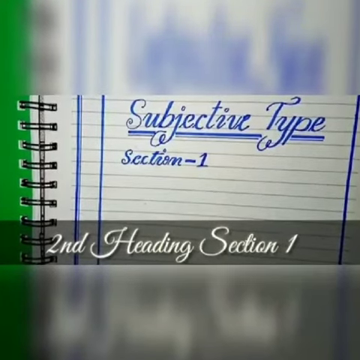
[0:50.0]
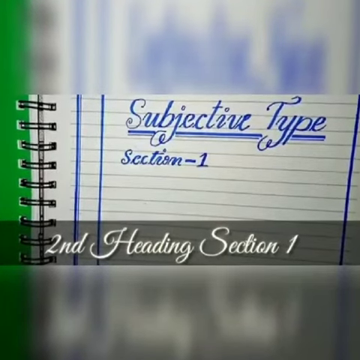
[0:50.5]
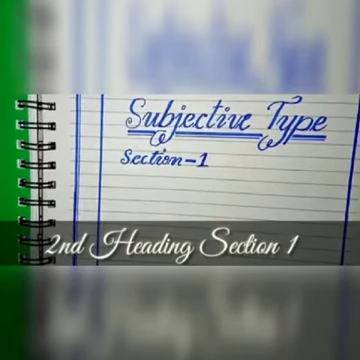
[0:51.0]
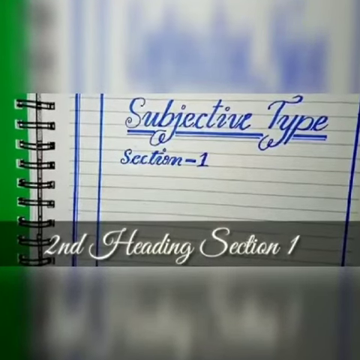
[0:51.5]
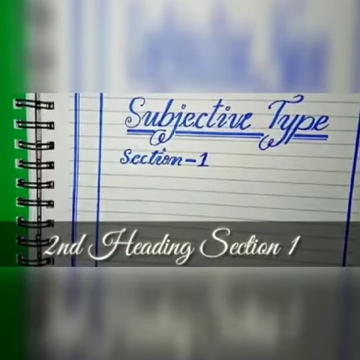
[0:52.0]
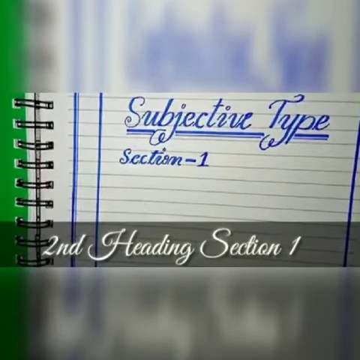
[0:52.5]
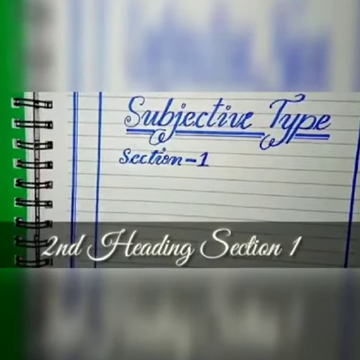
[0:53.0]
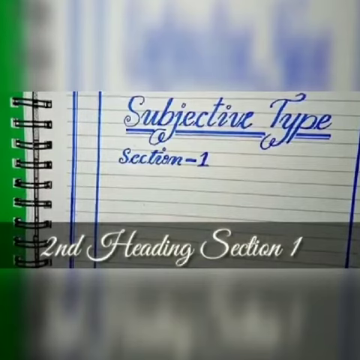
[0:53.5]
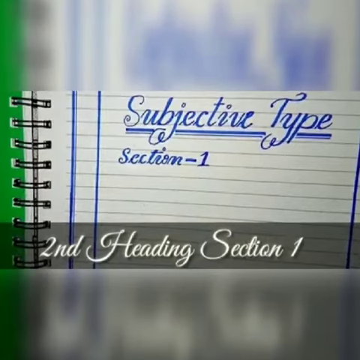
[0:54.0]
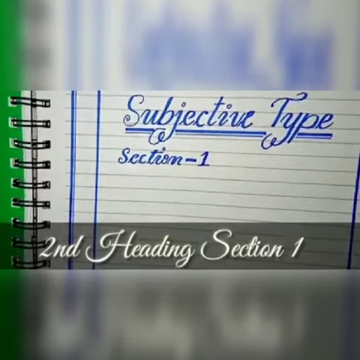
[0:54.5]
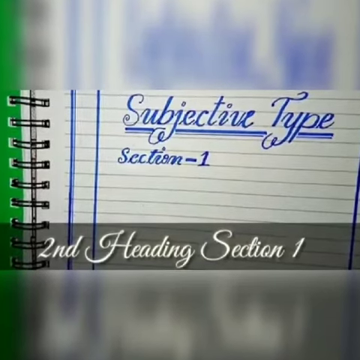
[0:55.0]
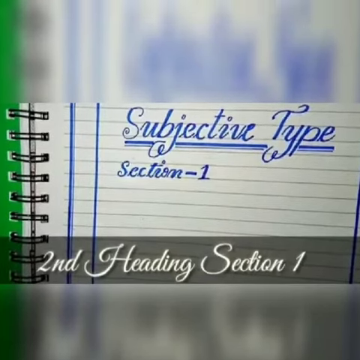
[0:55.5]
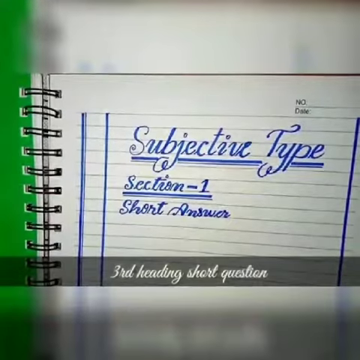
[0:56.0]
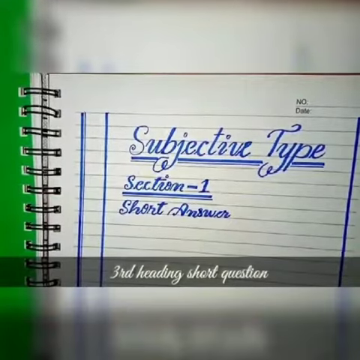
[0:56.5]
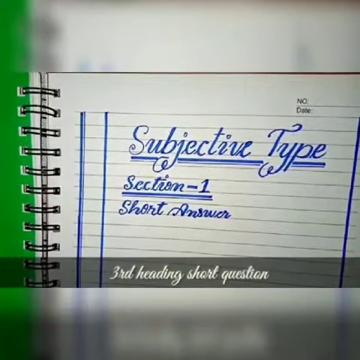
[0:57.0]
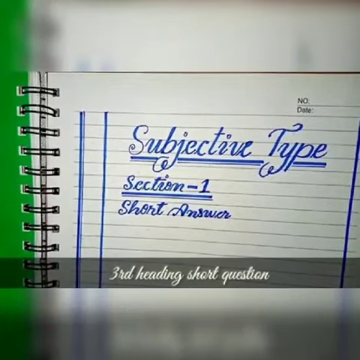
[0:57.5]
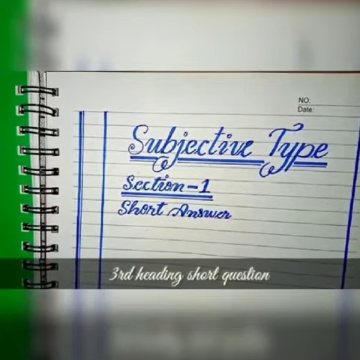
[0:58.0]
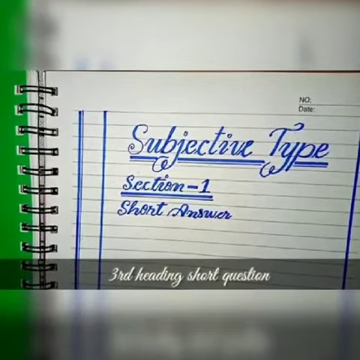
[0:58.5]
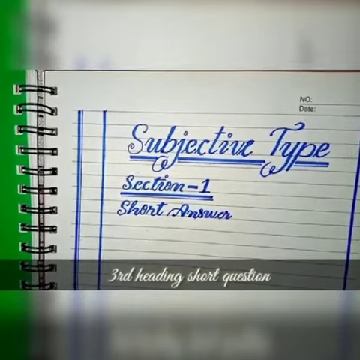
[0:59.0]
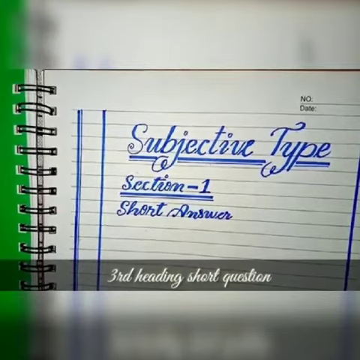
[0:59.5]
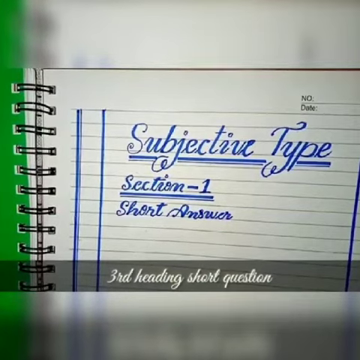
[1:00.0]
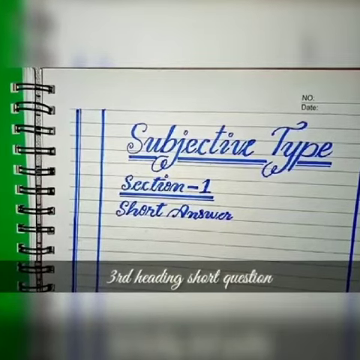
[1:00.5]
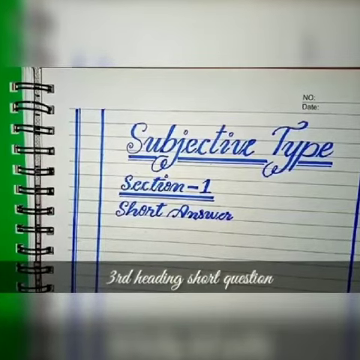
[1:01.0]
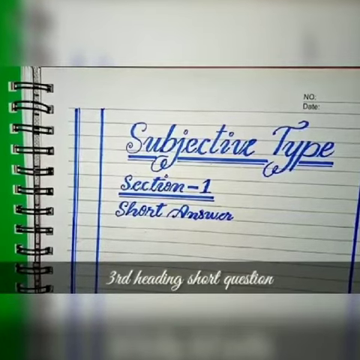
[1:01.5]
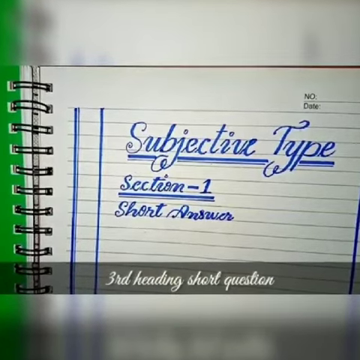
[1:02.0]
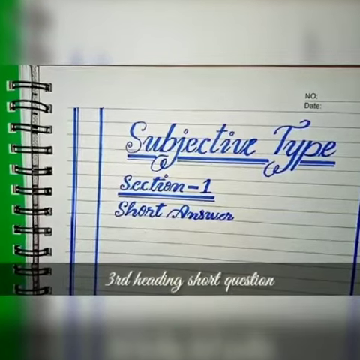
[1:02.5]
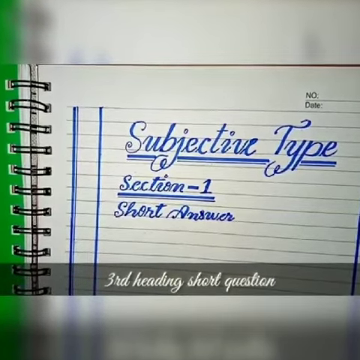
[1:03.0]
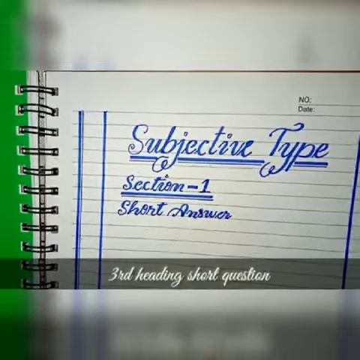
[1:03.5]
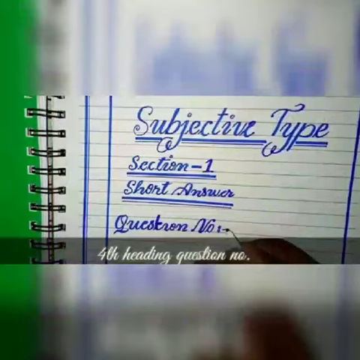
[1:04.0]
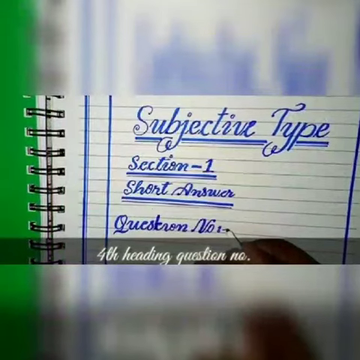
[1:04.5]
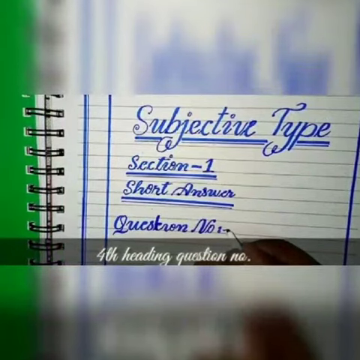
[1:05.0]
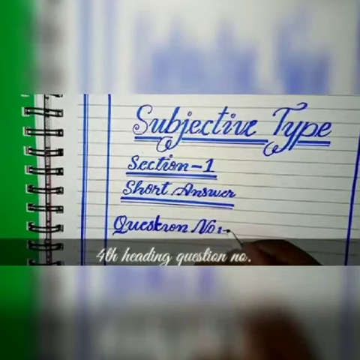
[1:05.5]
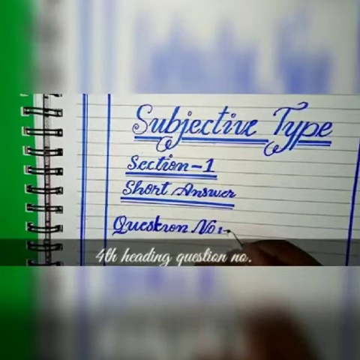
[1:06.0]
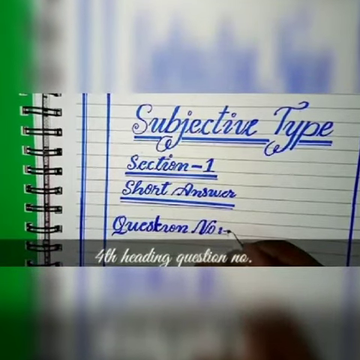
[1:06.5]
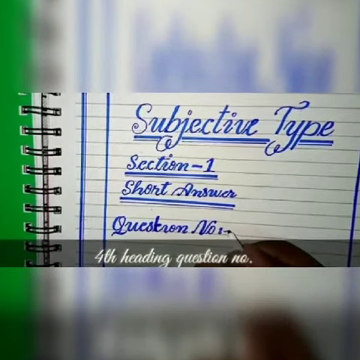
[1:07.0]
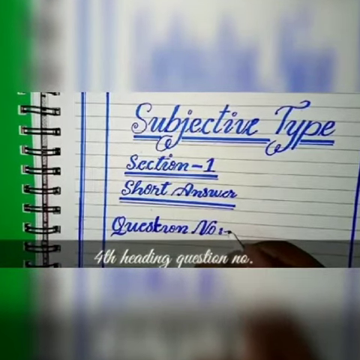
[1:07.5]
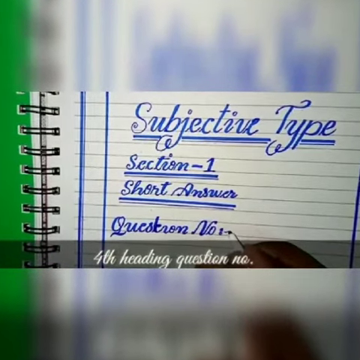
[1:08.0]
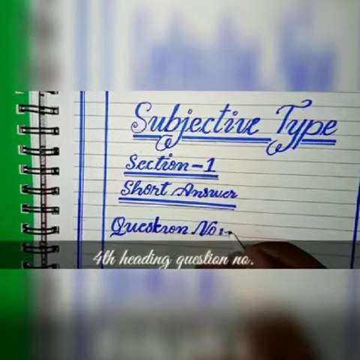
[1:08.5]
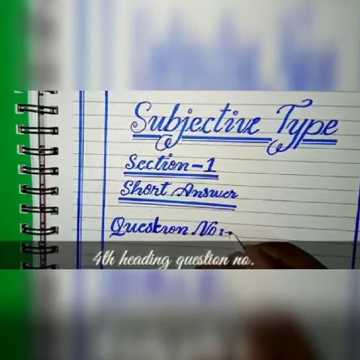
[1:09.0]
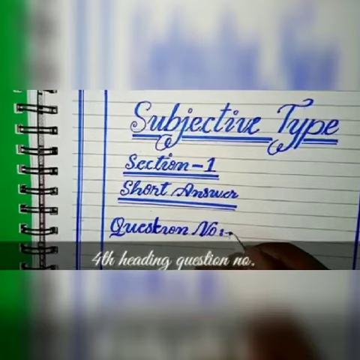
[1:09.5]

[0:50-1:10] The green spiral notebook is shown zoomed up, with the margins already in place. The words "subjective type" are written across about four lines and underlined, followed by a blank line, and under it "section-1" is written. A caption in white on a black see-through banner reads "second heading section one." Another notebook view appears, and now "short answer" is written underneath section one. The caption returns, reading "third heading short question," and in the corner of the paper there is something about "no" and "date." Another direction then reads "fourth heading question number." Written on the page are section one, a line, the next line "short answer" underlined, a space for a line, and then "question number one."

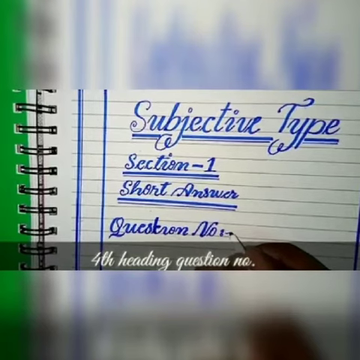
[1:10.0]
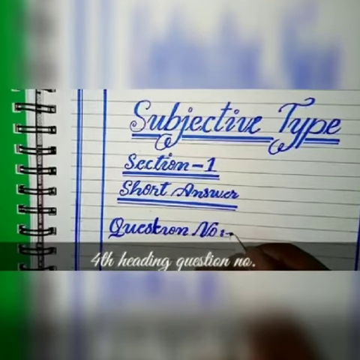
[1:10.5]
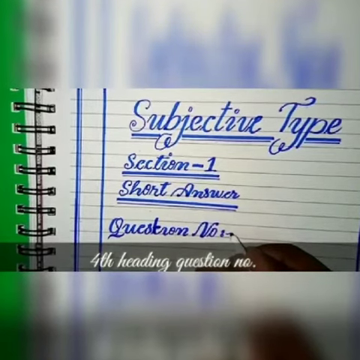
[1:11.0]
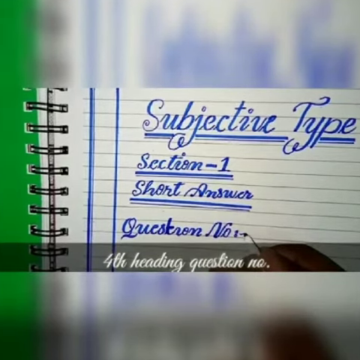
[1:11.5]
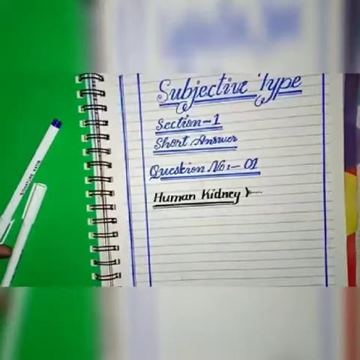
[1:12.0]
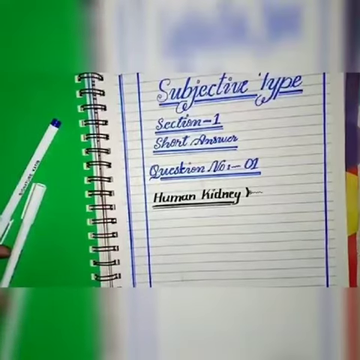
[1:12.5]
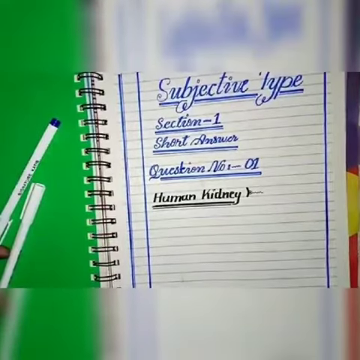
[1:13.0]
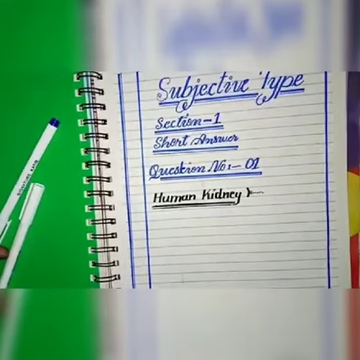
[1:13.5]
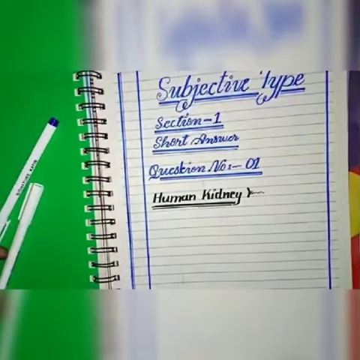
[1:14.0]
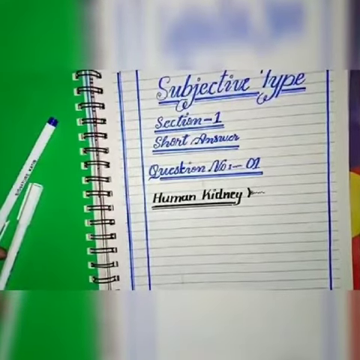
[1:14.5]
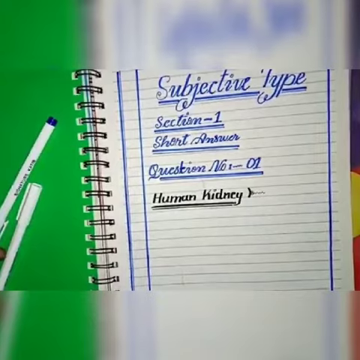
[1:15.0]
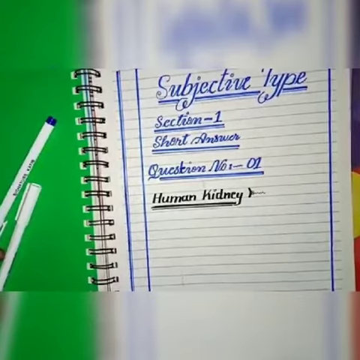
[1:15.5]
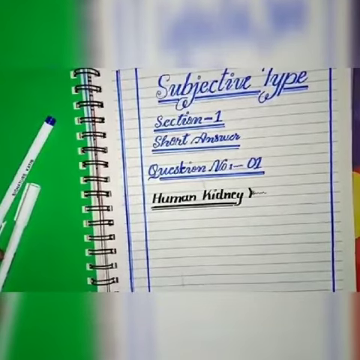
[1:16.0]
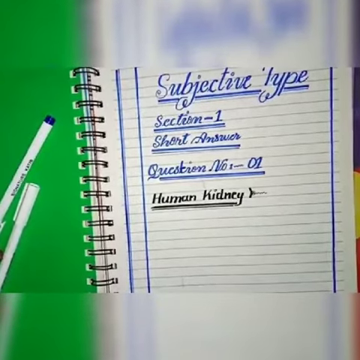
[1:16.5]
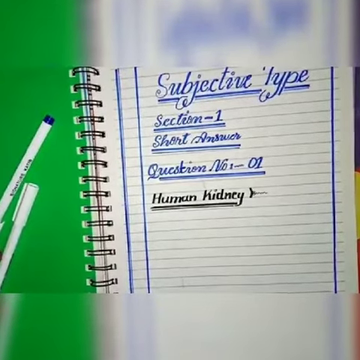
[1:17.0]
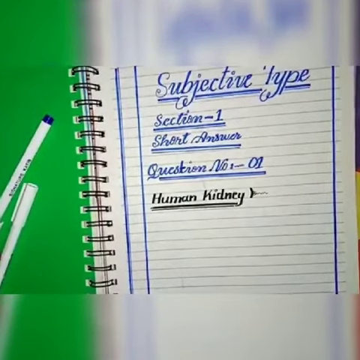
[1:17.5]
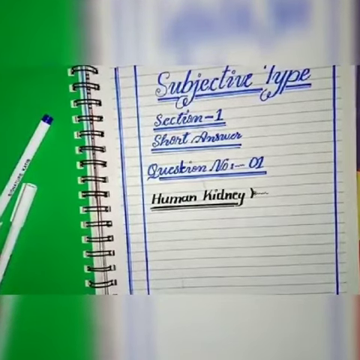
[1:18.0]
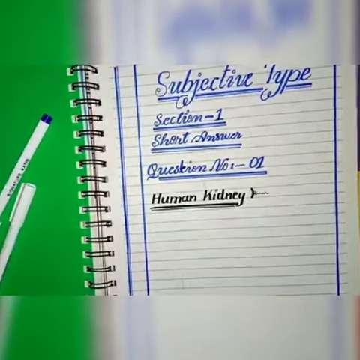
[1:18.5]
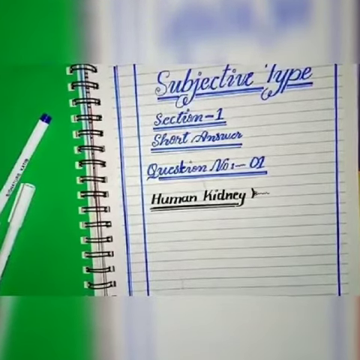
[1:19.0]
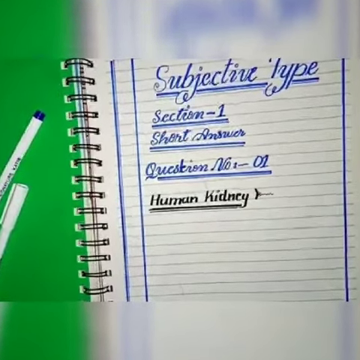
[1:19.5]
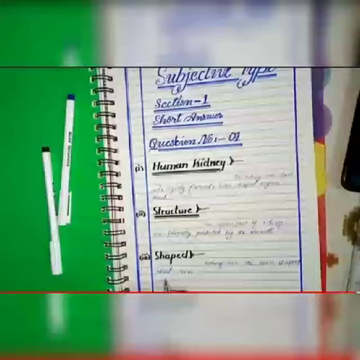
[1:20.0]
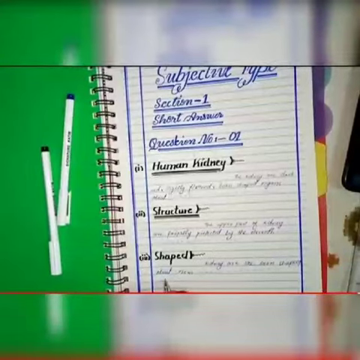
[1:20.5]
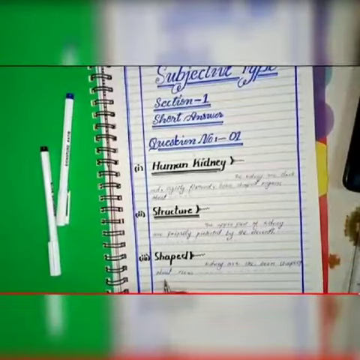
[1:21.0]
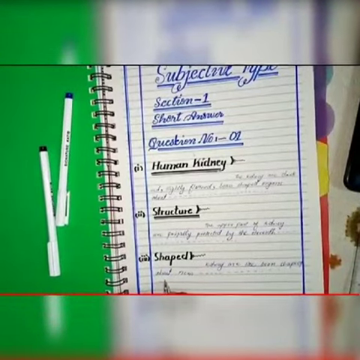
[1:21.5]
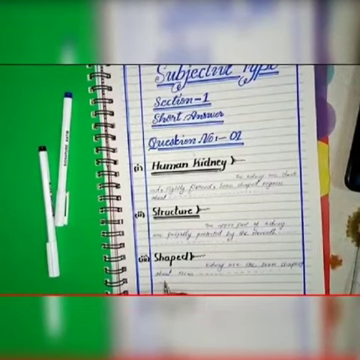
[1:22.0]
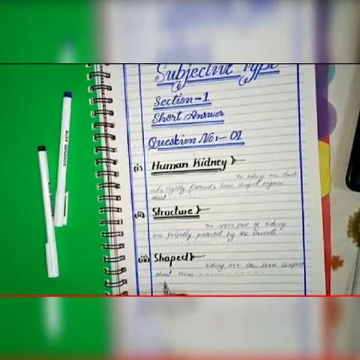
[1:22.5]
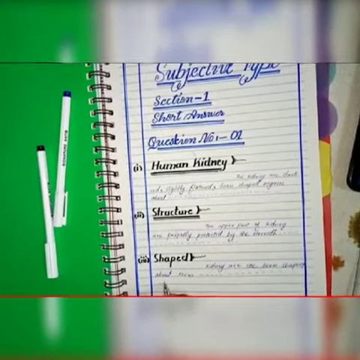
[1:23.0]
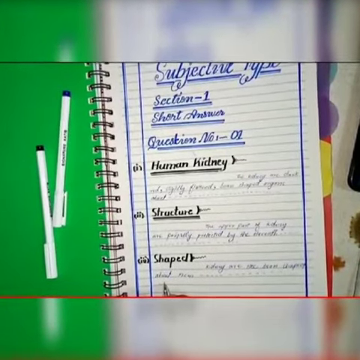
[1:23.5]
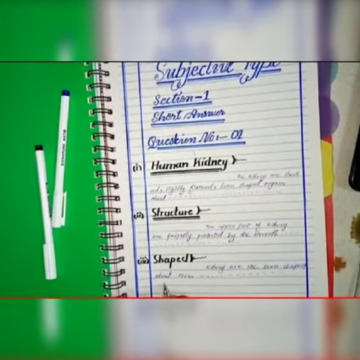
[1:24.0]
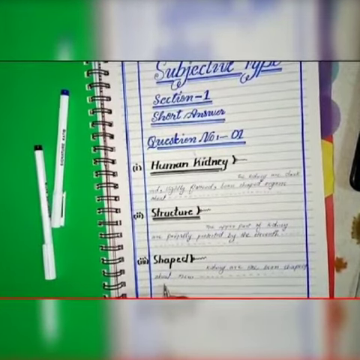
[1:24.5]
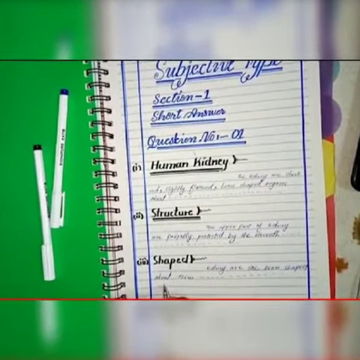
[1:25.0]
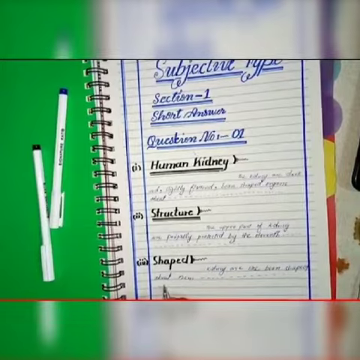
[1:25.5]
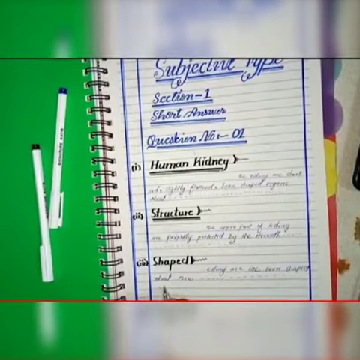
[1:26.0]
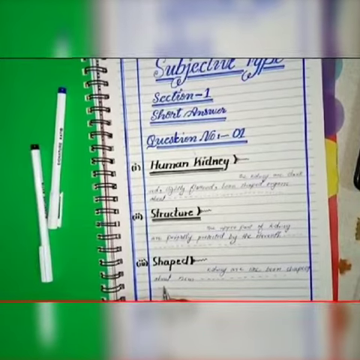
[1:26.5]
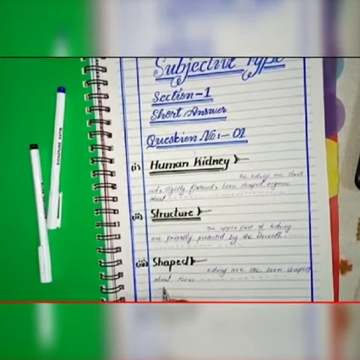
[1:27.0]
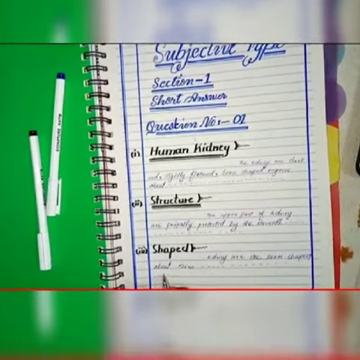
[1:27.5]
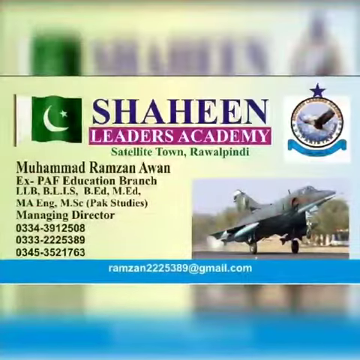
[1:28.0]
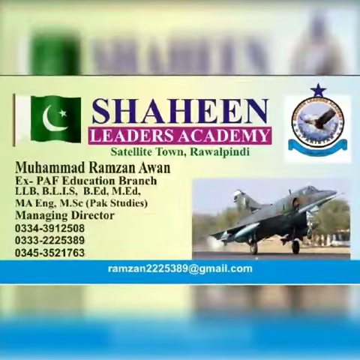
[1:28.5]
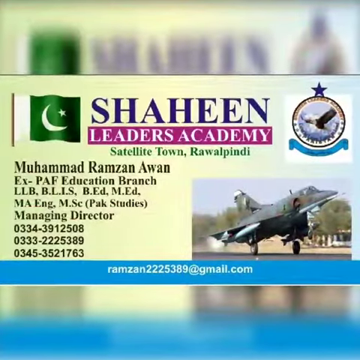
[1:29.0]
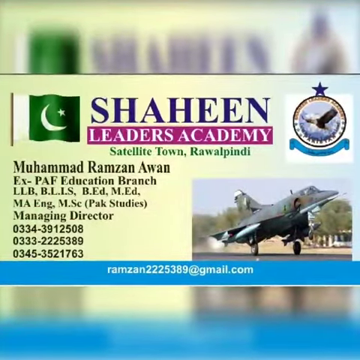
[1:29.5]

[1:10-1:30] The spiral notebook still shows "subjective type," "section one," "short answers" and the question numbers, "01," all written in blue. Below a blank line, "human kidney" is written and underlined, with some type of drawing, and two pins are on the side of the green where the notebook is. The image zooms in, and under "human kidney" there seems to be writing taking up three lines, too far away to read. Then come a Roman numeral one and a Roman numeral two with "structure," the same image as by "human kidney," and writing taking up two lines that is underlined. Under that is a Roman numeral three with "shaped," the same image, and writing taking up two lines. The camera does something like zooming in. All of this is written in black. The video then switches to a screen that almost looks like a business card, with the same image used as a blurred background. There looks to be some type of flag related to Islamic culture, and text reads "Shaheen Leaders Academy satellite town Randolphini."